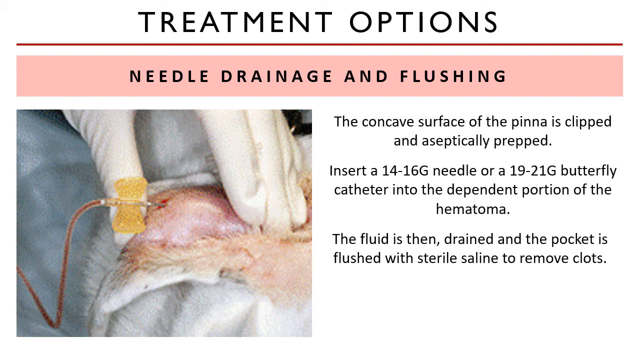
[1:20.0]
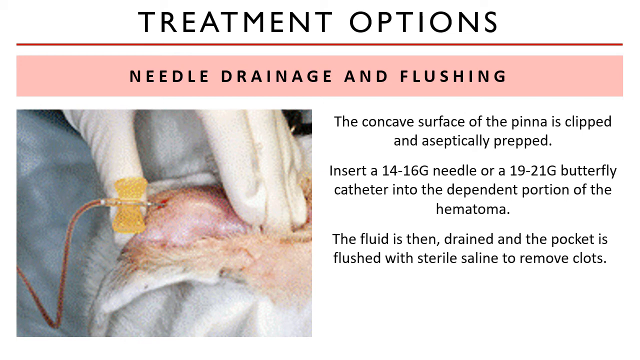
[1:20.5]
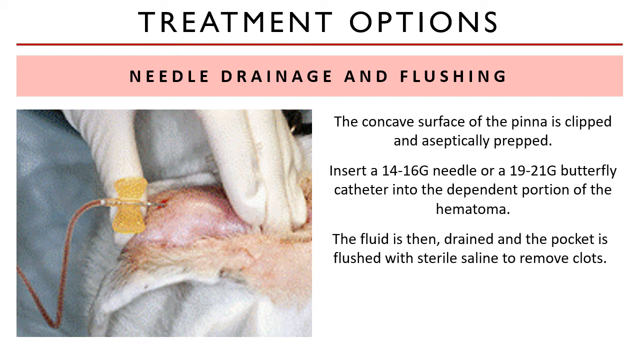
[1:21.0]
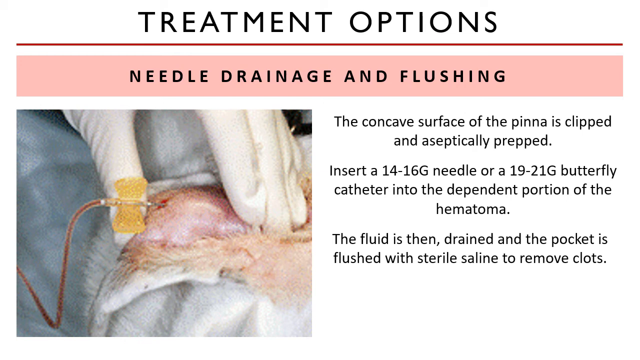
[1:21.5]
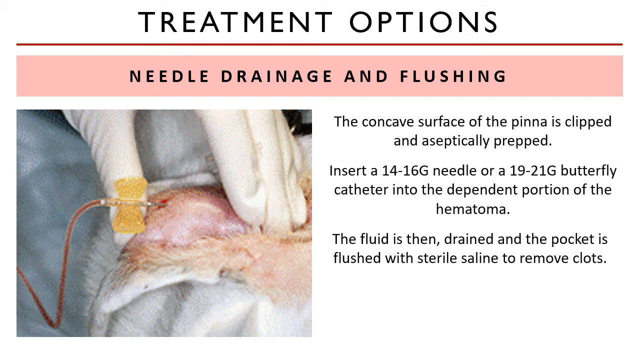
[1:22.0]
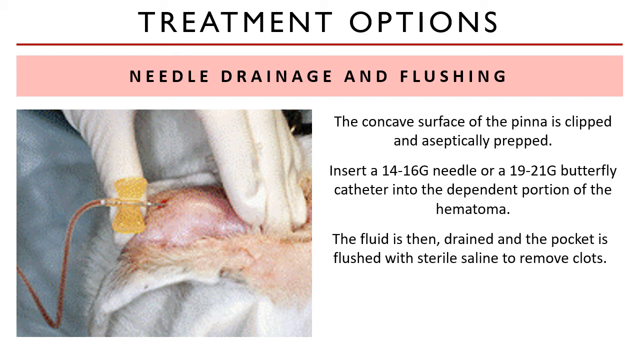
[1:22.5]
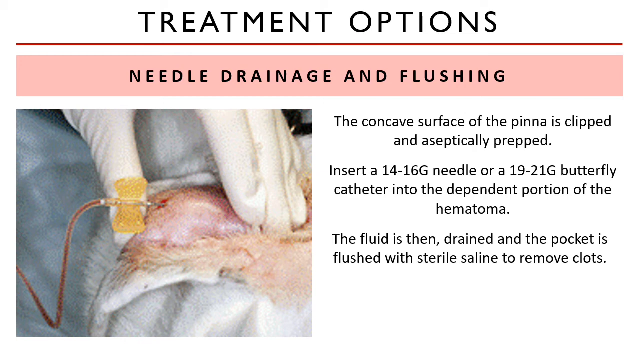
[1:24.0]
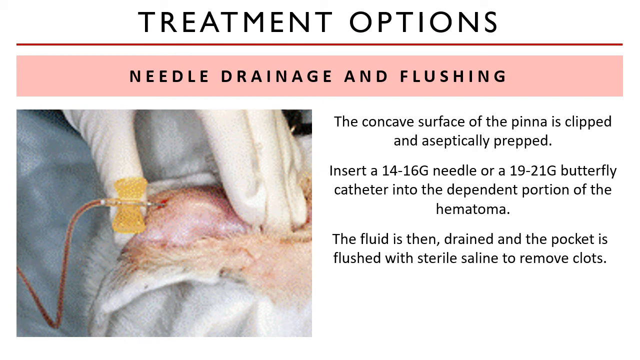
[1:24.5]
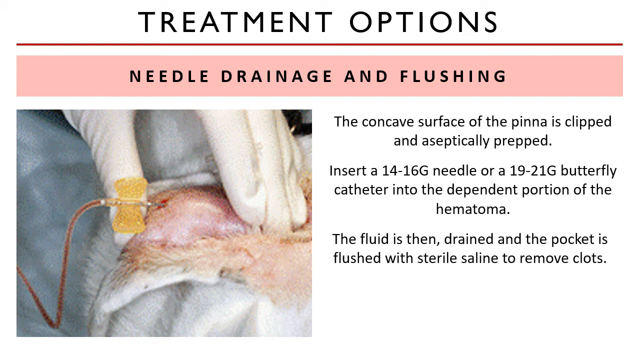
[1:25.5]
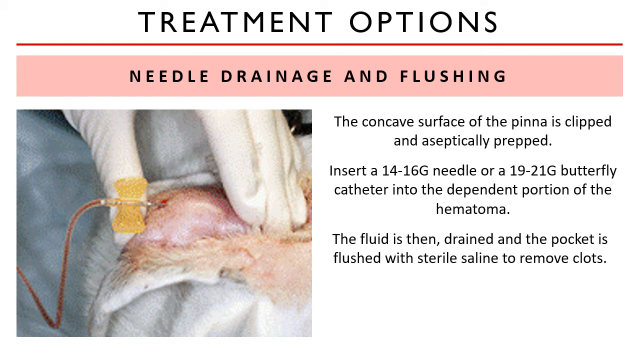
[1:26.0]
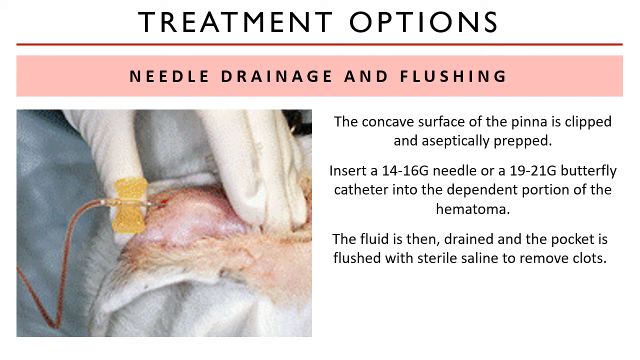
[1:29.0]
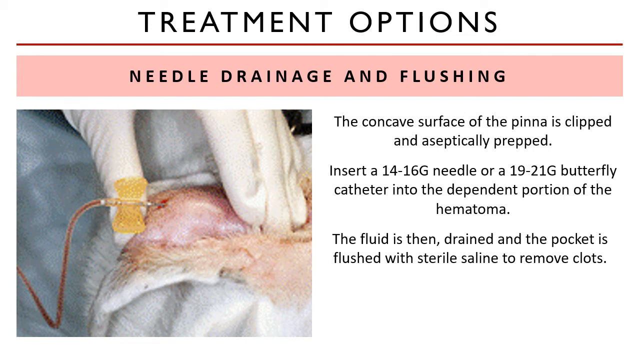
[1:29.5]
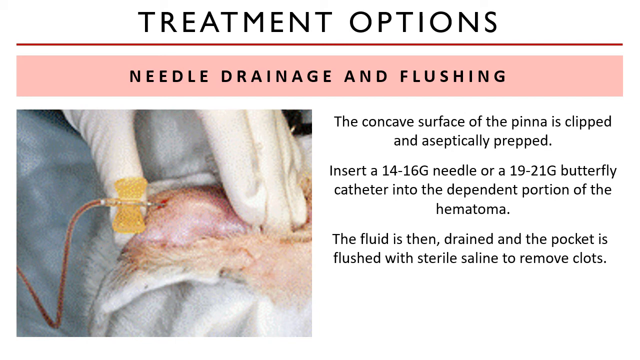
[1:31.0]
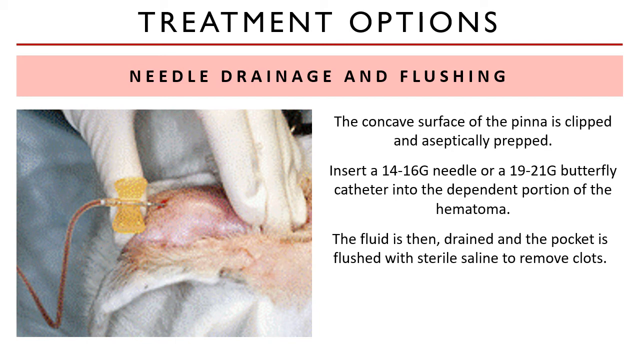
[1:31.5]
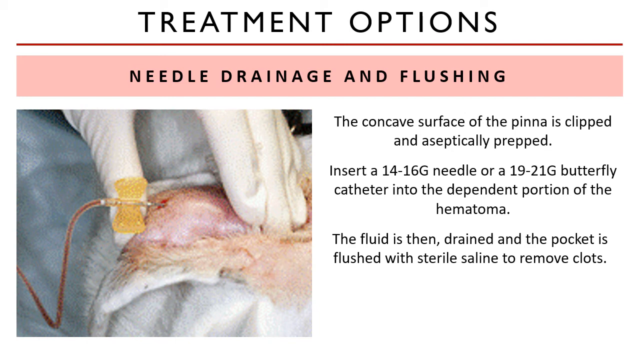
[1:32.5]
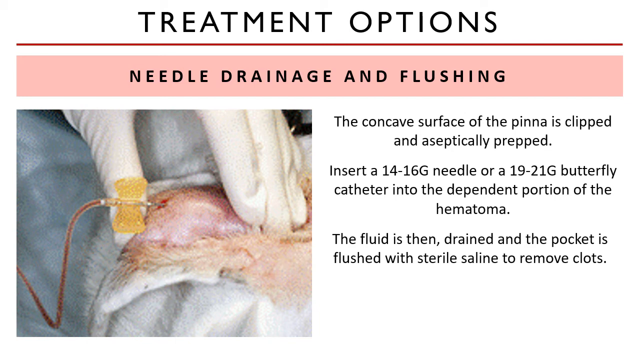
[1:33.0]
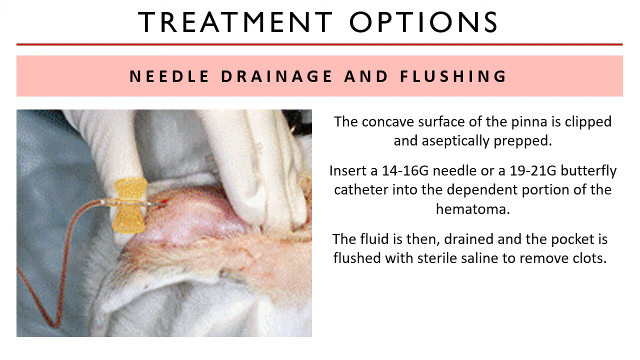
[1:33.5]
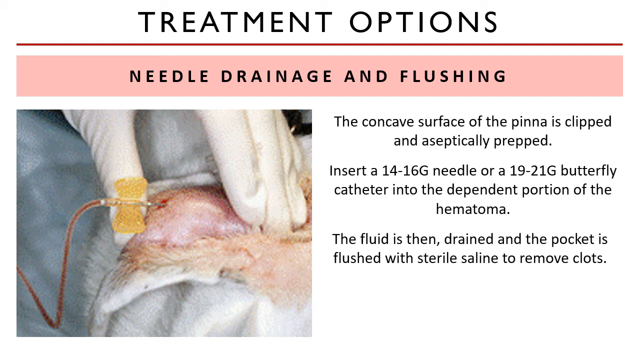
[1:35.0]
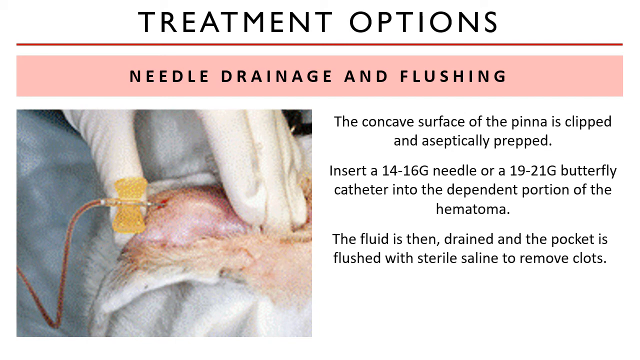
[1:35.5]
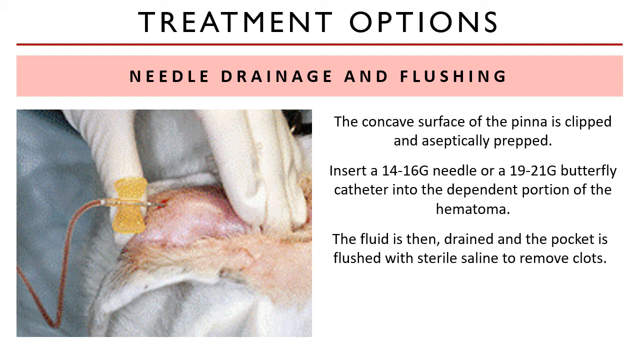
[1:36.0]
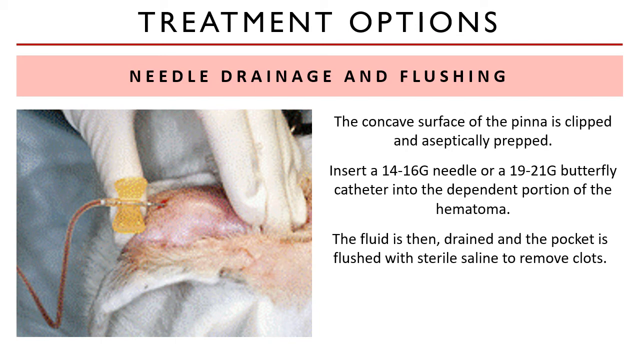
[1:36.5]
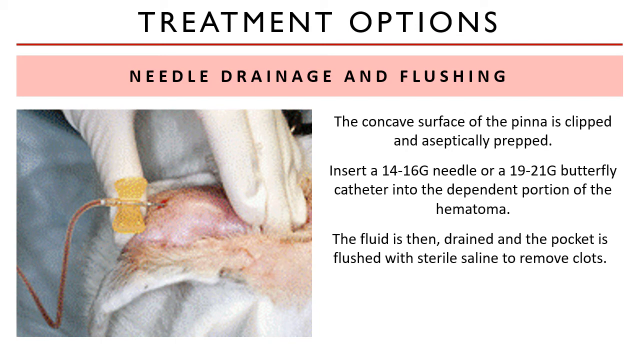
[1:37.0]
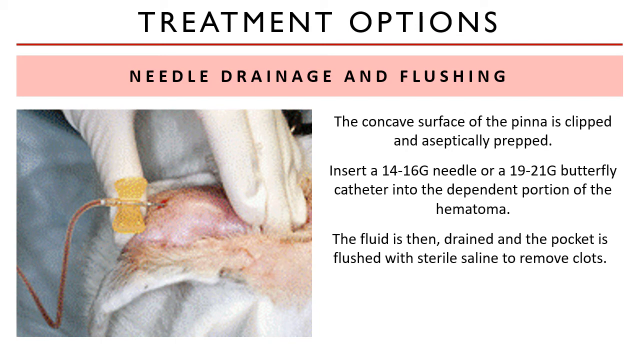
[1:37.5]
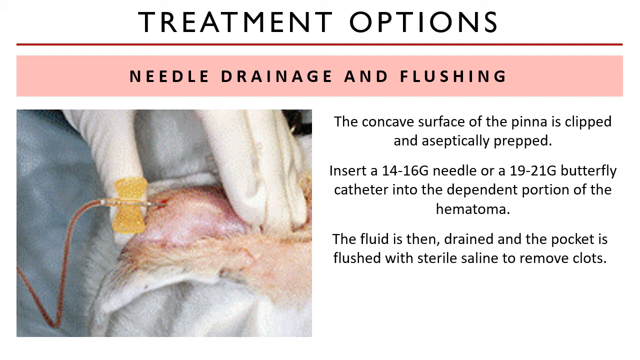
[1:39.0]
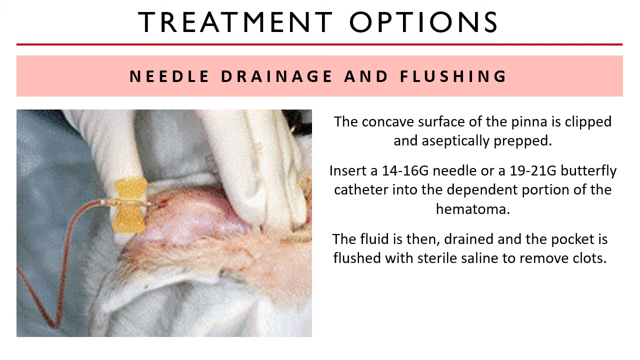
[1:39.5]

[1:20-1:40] At the top, in black capital letters, the text reads "treatment options," with a red line across separating the sections. The background becomes a little white, and a pink border runs across; in it, in black capital letters, it reads "needle drainage and flushing." Next to the image, text reads "the concave surface of the pinna is clipped" and "aseptically prep," then after some space "insert a 14-16 g needle or a 19-21 g butterfly catheter" into "the dependent portion of the hematoma," then after more space "the fluid is then drained and the pocket is flushed with sterile saline to remove the clots." The image includes most of the medical professional's left hand in a white glove.